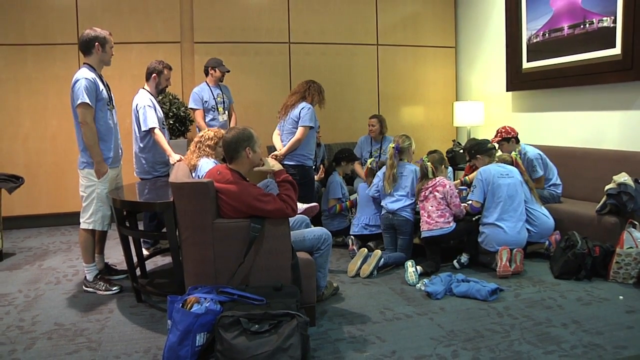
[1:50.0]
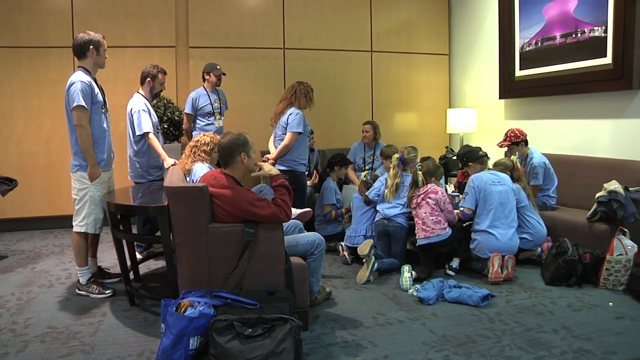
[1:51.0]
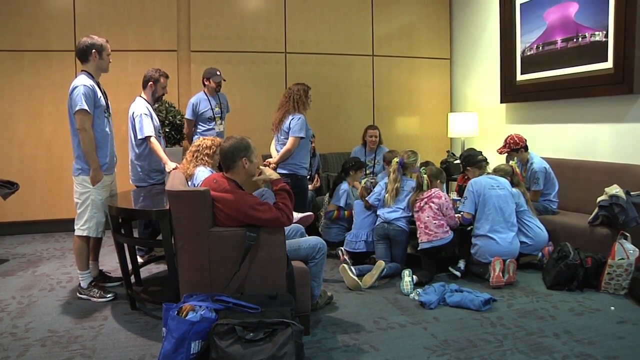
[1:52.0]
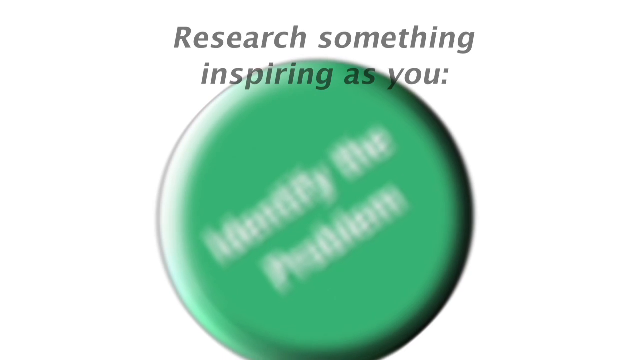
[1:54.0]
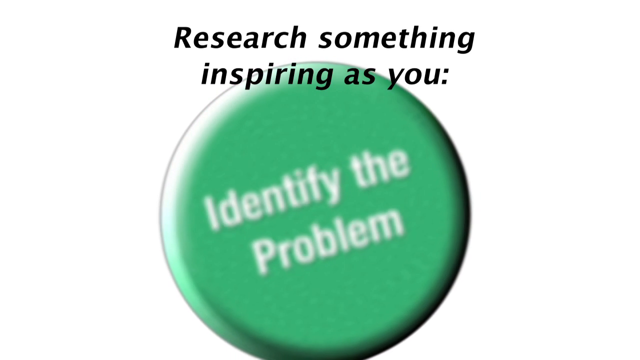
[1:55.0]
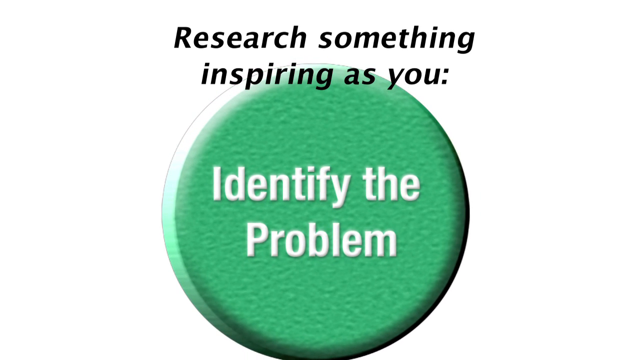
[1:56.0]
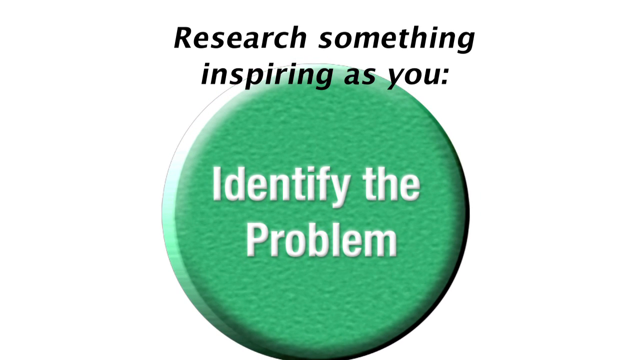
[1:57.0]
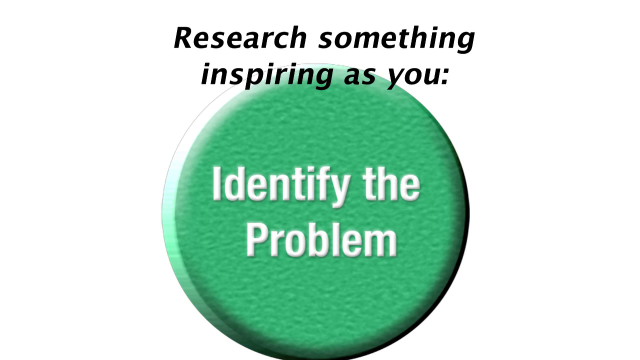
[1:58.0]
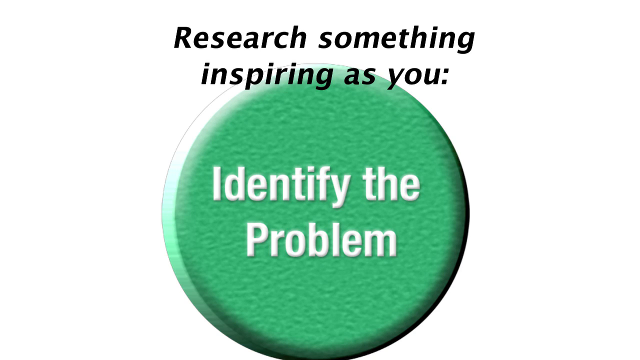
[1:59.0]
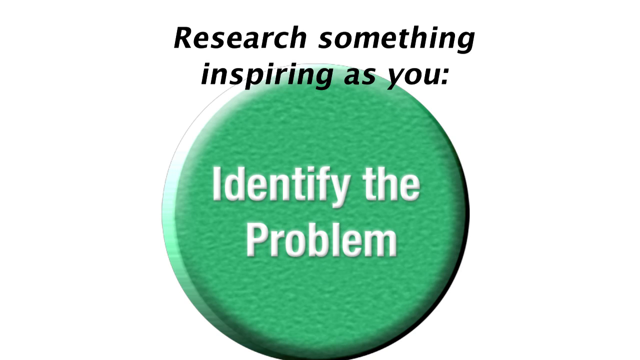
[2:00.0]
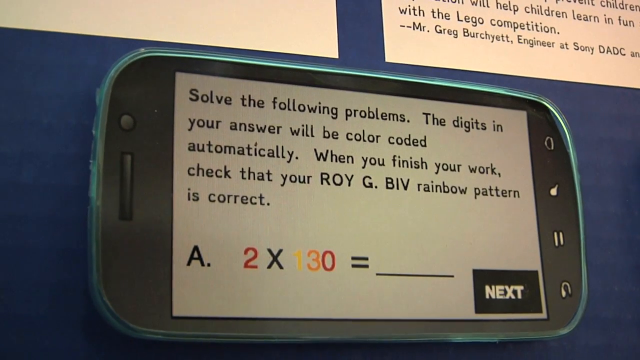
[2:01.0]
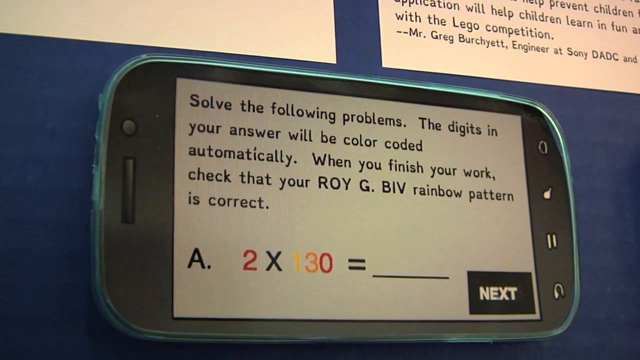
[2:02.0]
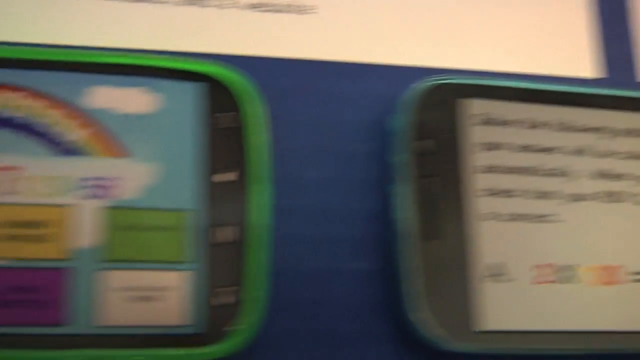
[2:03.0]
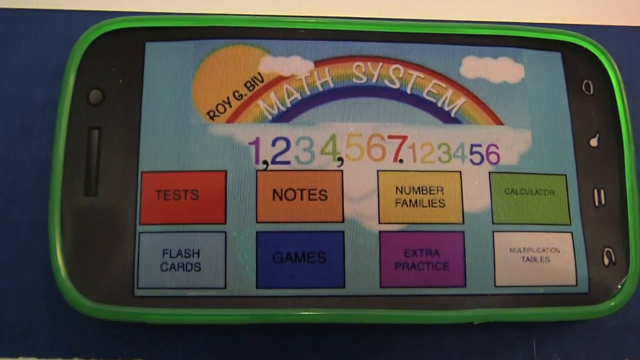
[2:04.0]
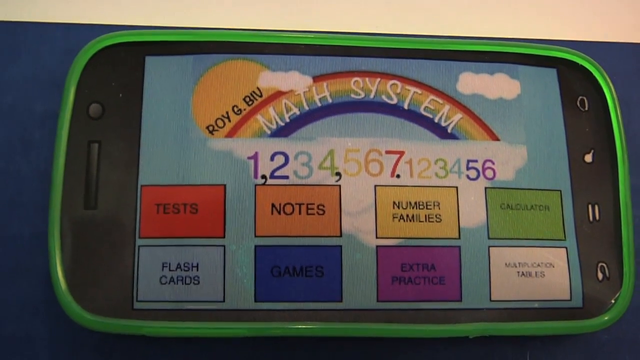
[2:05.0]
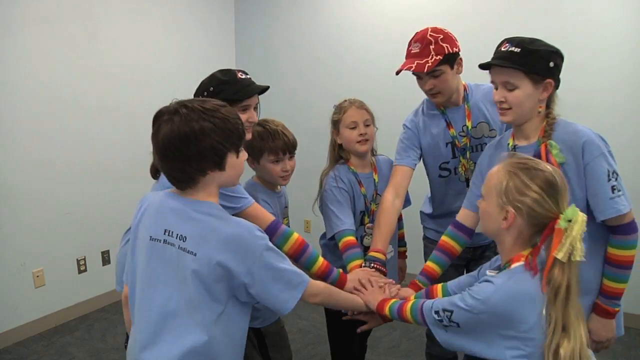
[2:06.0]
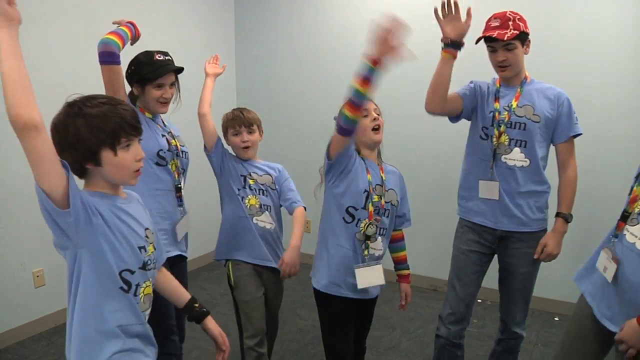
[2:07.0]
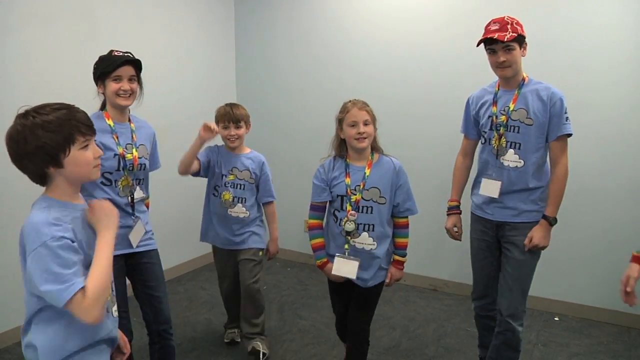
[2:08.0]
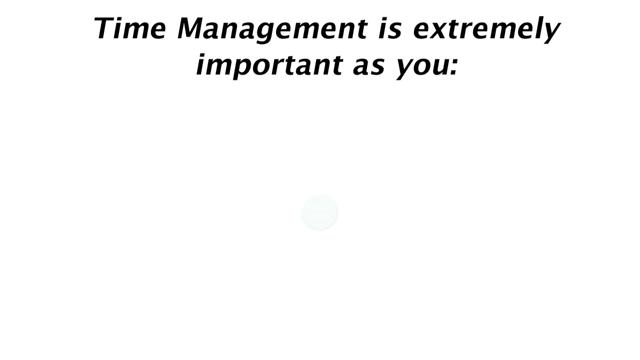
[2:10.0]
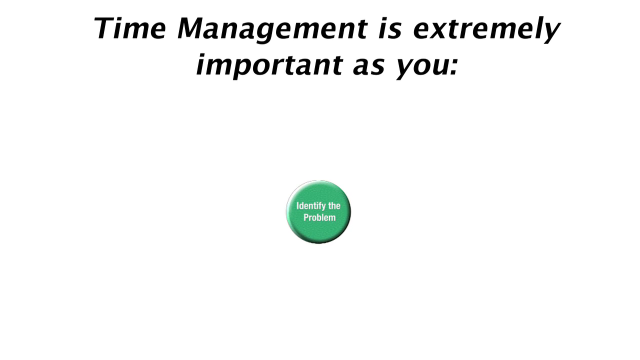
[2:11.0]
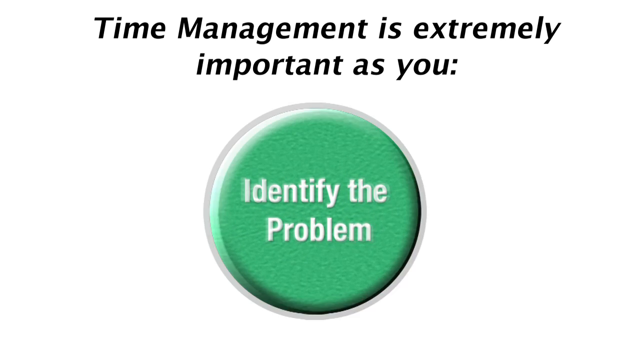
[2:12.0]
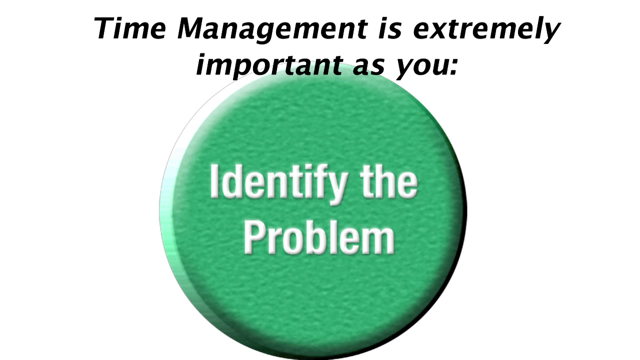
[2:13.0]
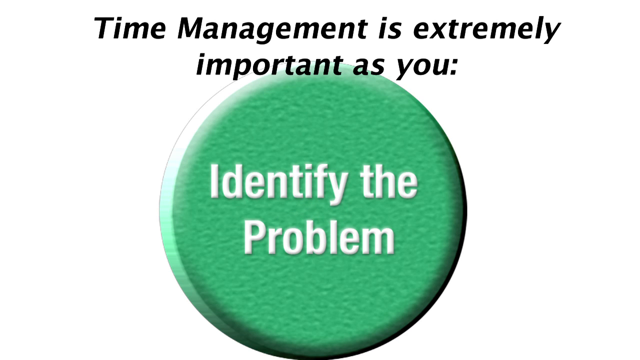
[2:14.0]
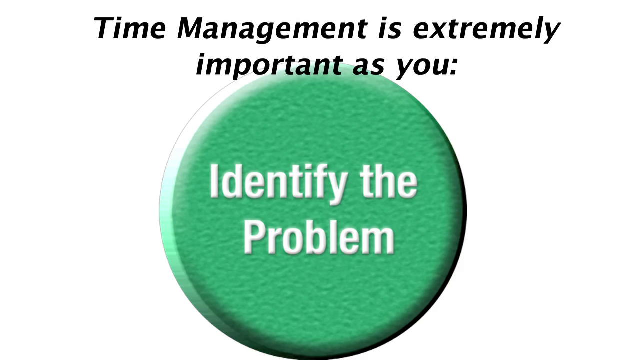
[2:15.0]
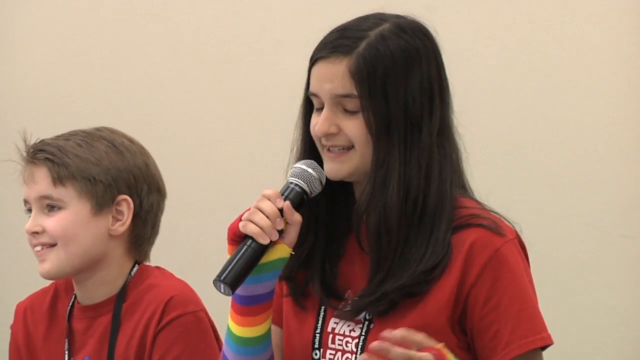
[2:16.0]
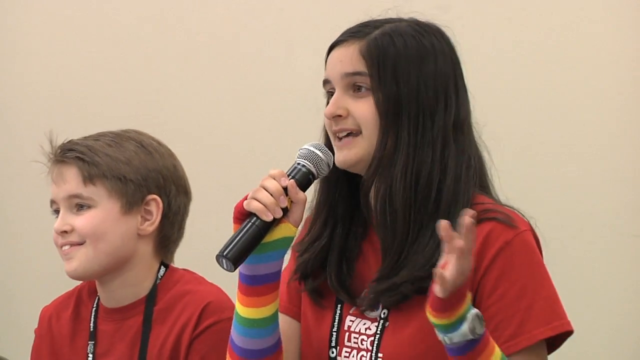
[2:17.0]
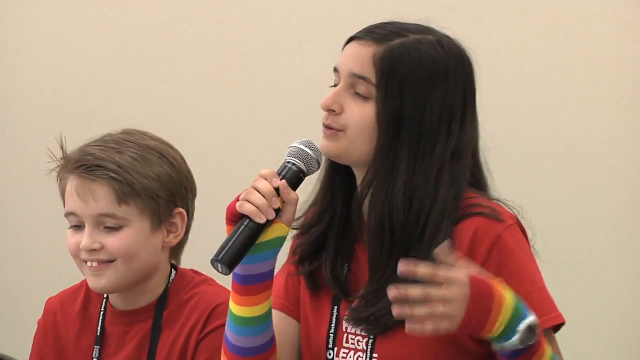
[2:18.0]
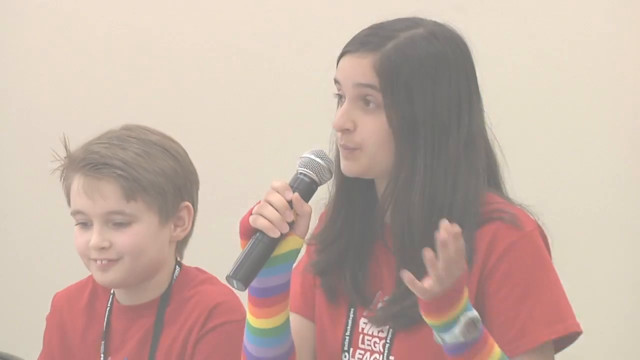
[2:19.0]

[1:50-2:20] What looks like a prayer group appears: the kids are in the corner, gathered in a circle with their heads down, apparently praying for success in their upcoming events. Meanwhile, adults sit around, a little left out. The screen then turns white, the words at the top say "research something inspiring," and a green medallion in the middle says "identify the problem." The video stays on this screen briefly, then switches to a close-up of a phone that says "solve the following problem. The digits in your answer will be color-coded" and "check that your ROYGBIV rainbow pattern is correct." It then shows the ROYGBU math system as 1 2 3 4 5 6 7 1 2 3 4 5 6, with everything color-coded.